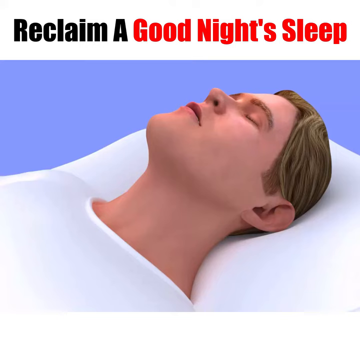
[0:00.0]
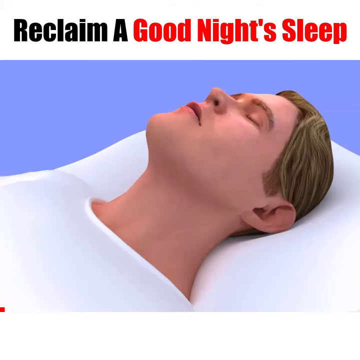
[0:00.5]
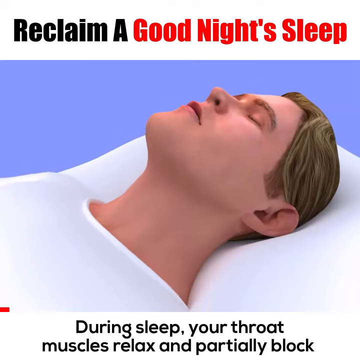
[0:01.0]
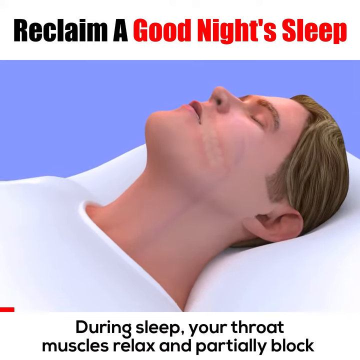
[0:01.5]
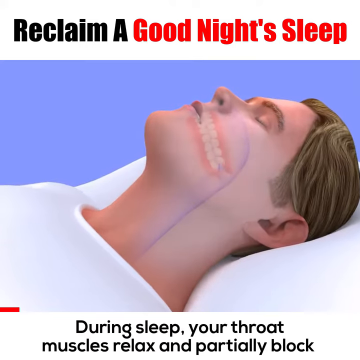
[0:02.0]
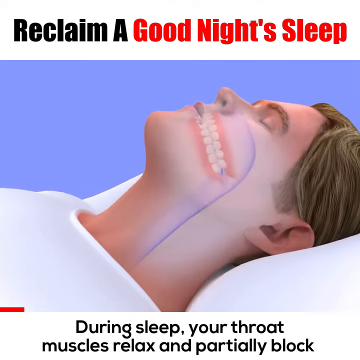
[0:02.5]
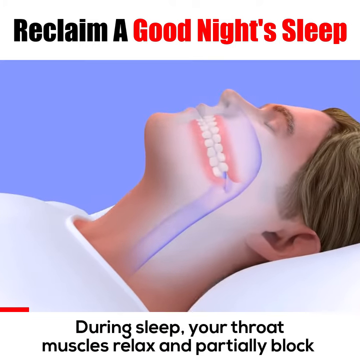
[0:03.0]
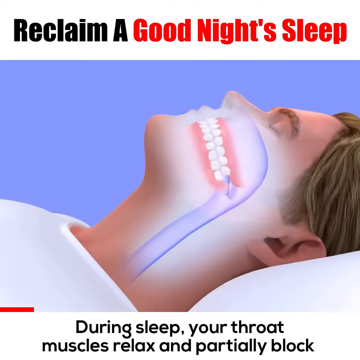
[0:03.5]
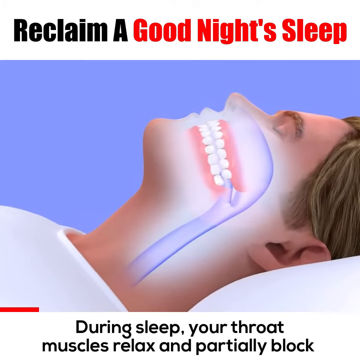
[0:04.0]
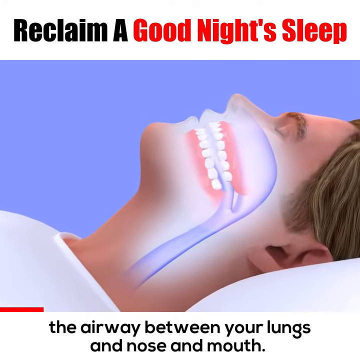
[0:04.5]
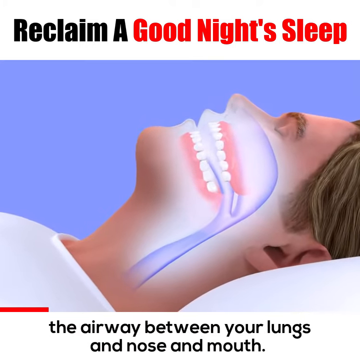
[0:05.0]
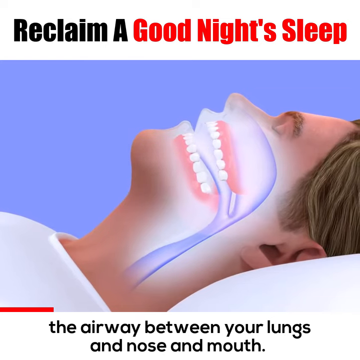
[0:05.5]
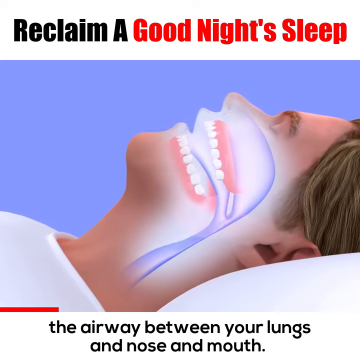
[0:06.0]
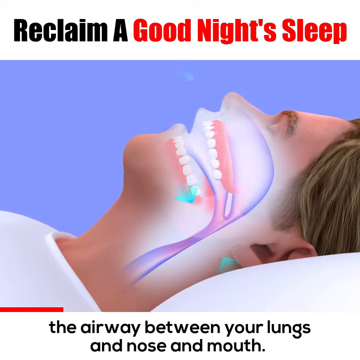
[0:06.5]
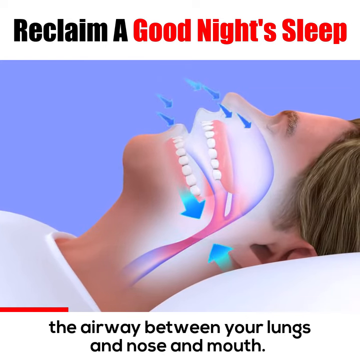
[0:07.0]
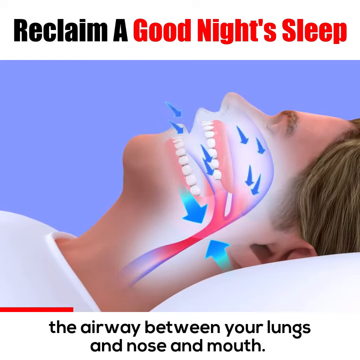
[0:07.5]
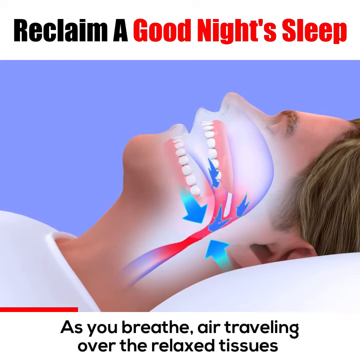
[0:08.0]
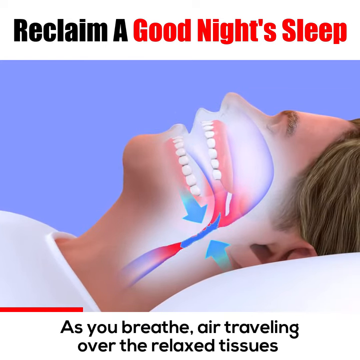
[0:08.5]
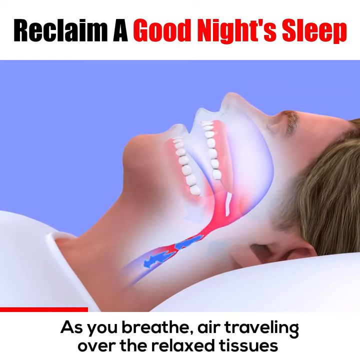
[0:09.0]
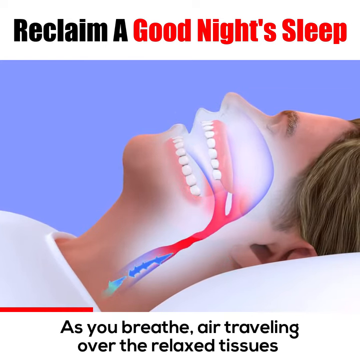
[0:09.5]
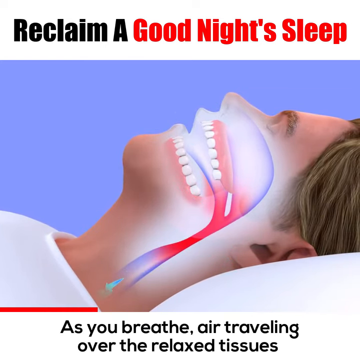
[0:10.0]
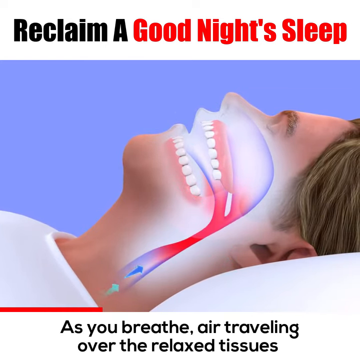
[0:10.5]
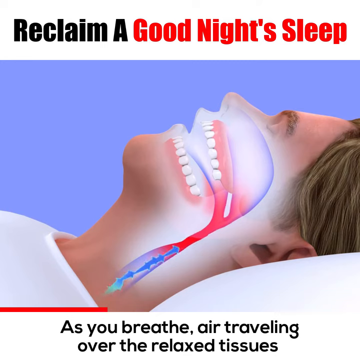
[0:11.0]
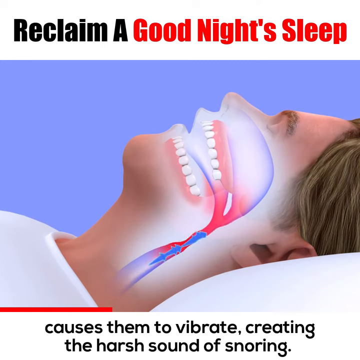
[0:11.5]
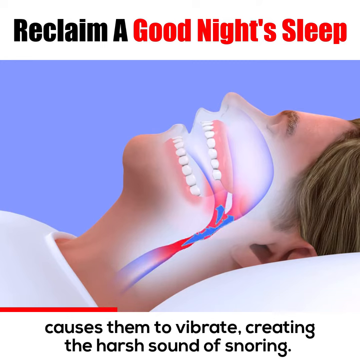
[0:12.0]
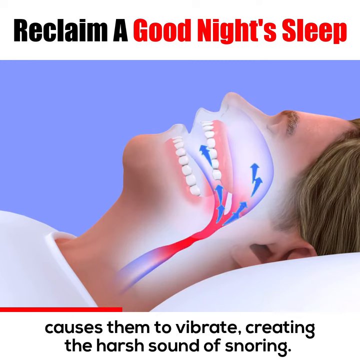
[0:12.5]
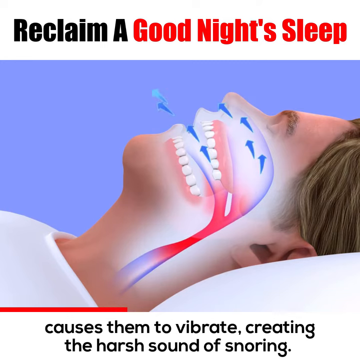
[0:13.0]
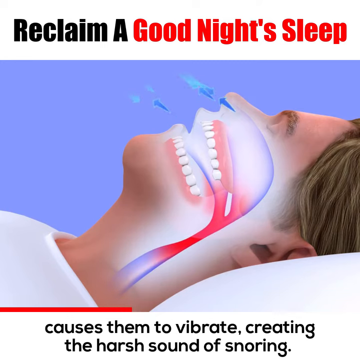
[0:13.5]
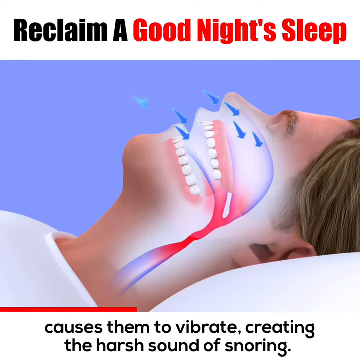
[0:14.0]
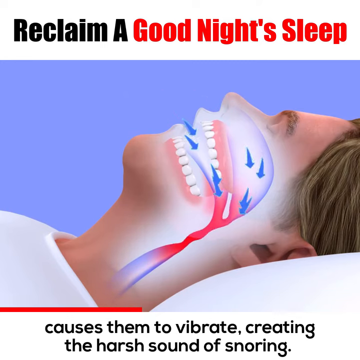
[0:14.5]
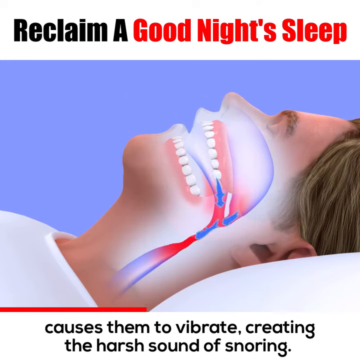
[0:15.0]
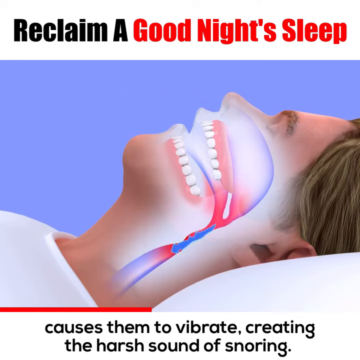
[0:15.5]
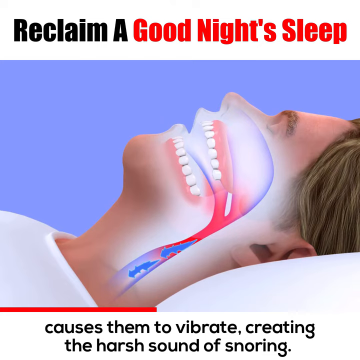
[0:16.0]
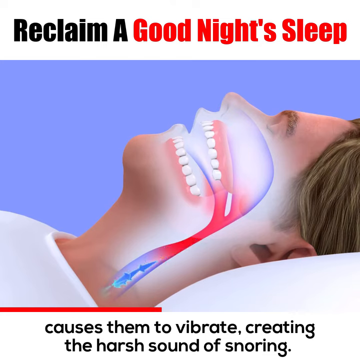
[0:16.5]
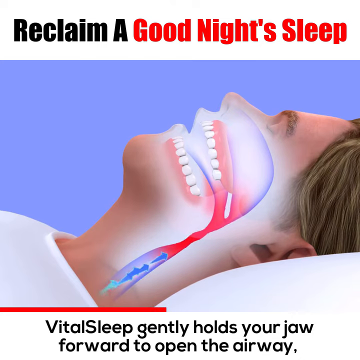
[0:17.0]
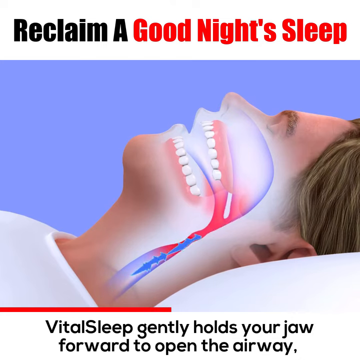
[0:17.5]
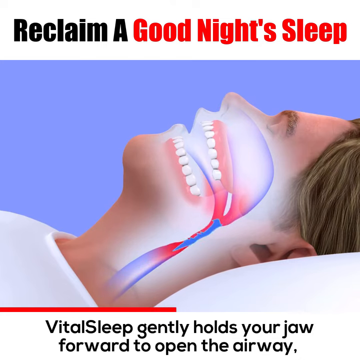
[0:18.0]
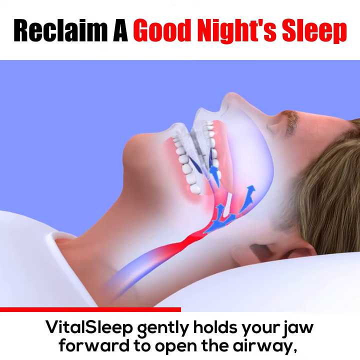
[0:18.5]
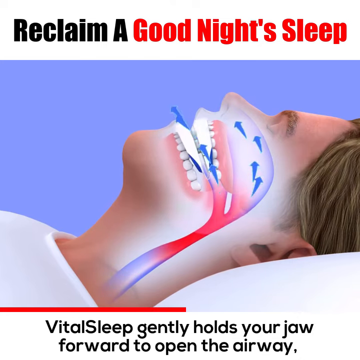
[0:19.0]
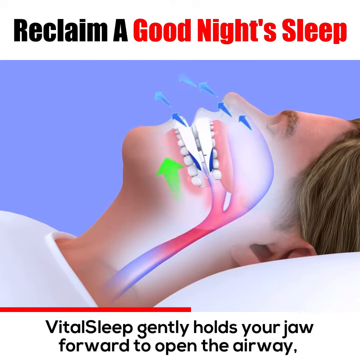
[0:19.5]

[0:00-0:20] The video opens with an illustration or animated clip of a man lying on a bed. He has blonde hair and brown eyebrows and wears a white top. At the top, black text reads "Reclaim a" followed by red text reading "good night's sleep." At the bottom of the screen, black text on a white background reads "during sleep your throat muscles relax and partially block." A red bar moves across the screen to indicate how much of the video is left. The video zooms in on the illustrated man, revealing the inside of his mouth with his teeth and gums, blue pipes within, and blue arrows going behind the throat. Black text at the bottom reads "as you breathe air traveling over the relaxed tissues causes them to vibrate creating the harsh sound of snoring." Blue arrows go in and out of the man's mouth. Black text at the bottom then reads "Vita Sleep gently holds your jaw."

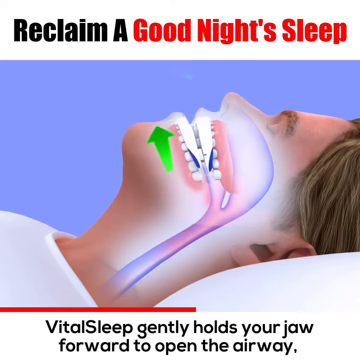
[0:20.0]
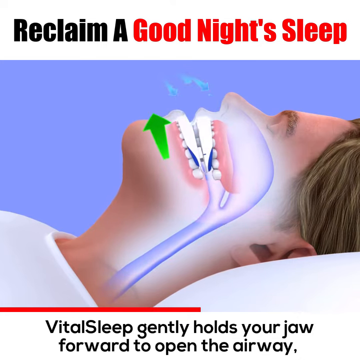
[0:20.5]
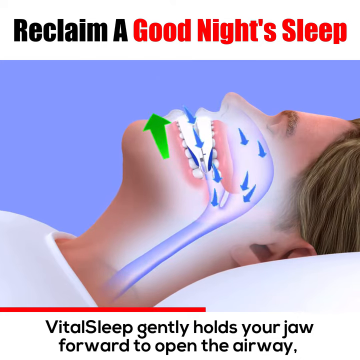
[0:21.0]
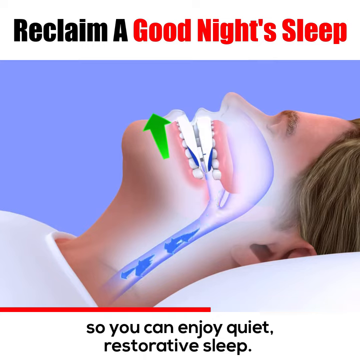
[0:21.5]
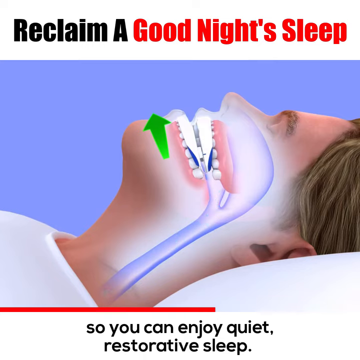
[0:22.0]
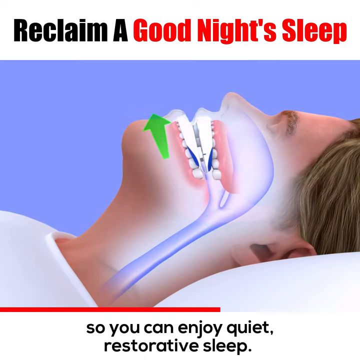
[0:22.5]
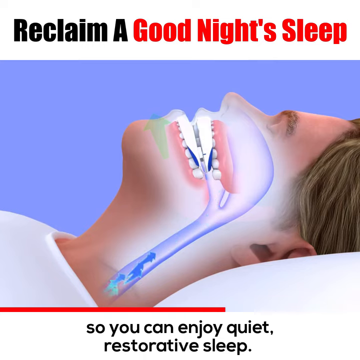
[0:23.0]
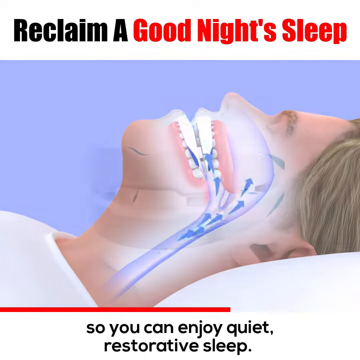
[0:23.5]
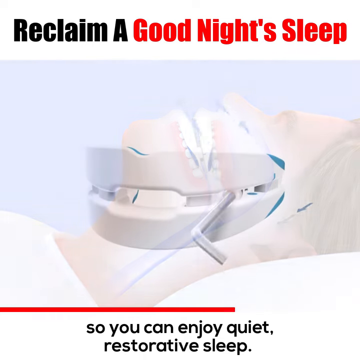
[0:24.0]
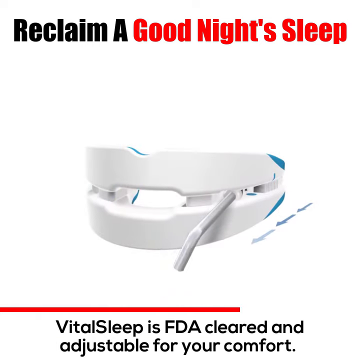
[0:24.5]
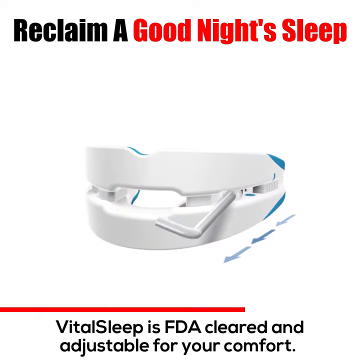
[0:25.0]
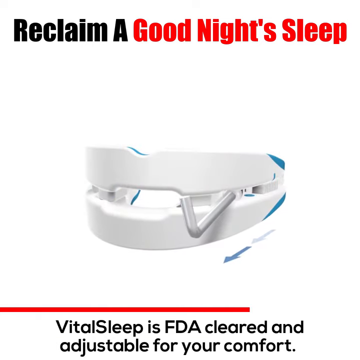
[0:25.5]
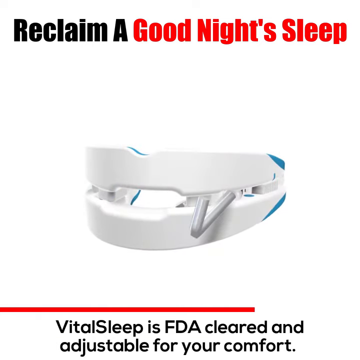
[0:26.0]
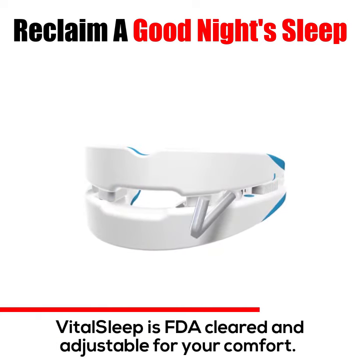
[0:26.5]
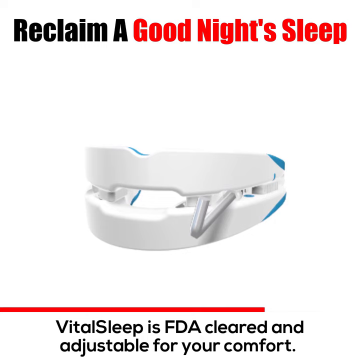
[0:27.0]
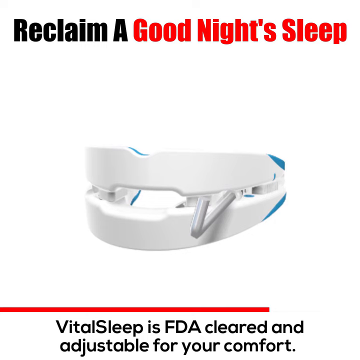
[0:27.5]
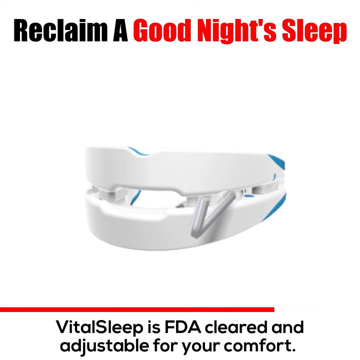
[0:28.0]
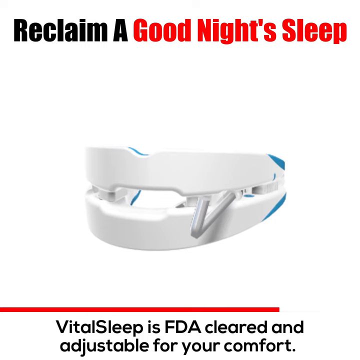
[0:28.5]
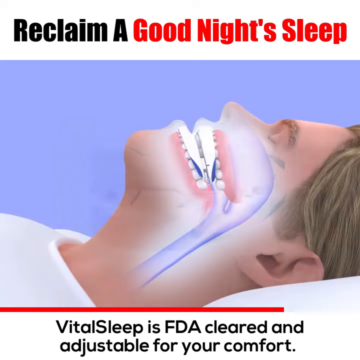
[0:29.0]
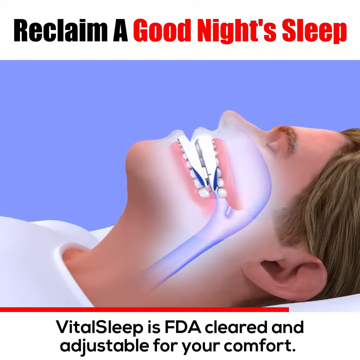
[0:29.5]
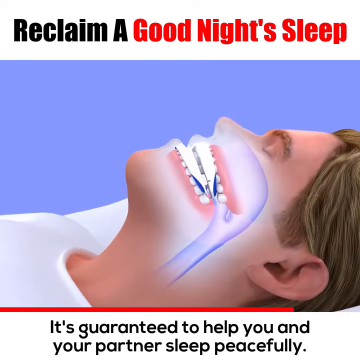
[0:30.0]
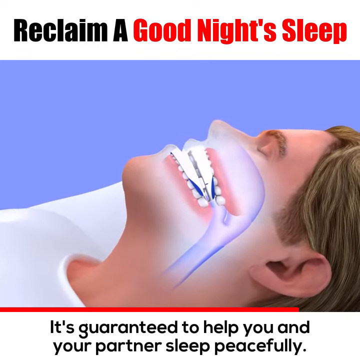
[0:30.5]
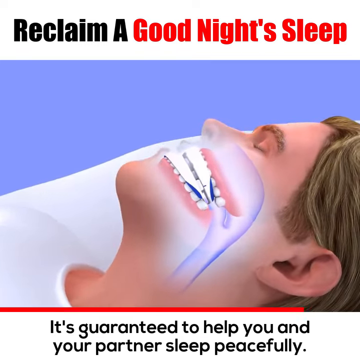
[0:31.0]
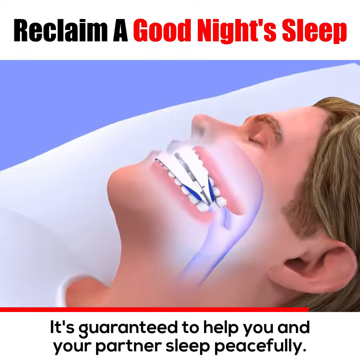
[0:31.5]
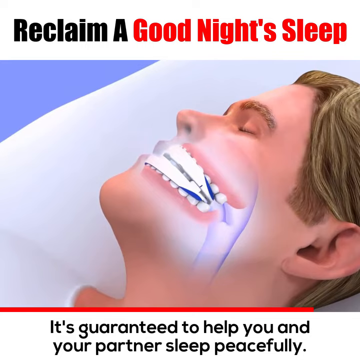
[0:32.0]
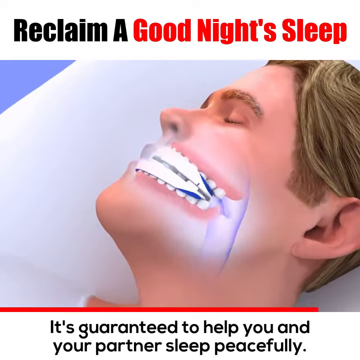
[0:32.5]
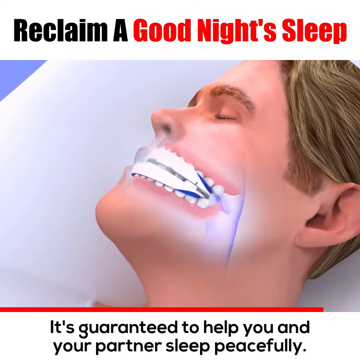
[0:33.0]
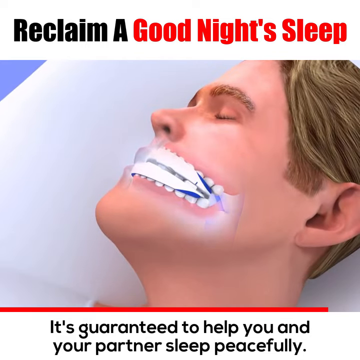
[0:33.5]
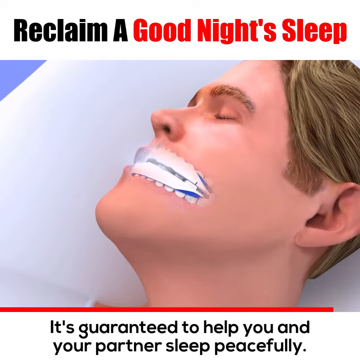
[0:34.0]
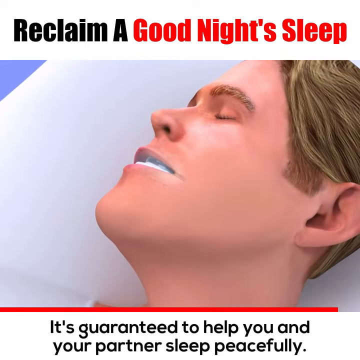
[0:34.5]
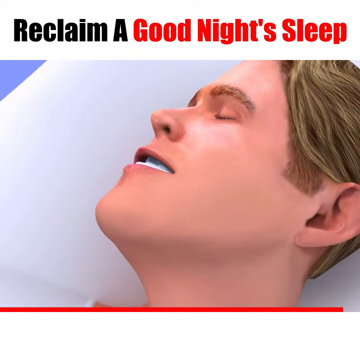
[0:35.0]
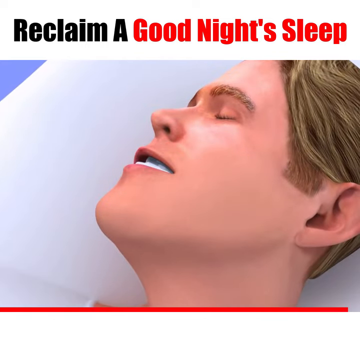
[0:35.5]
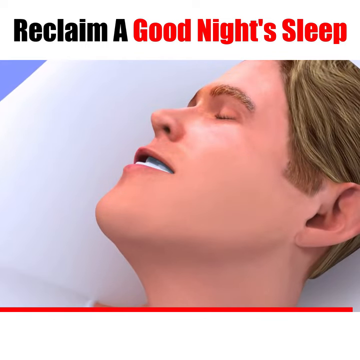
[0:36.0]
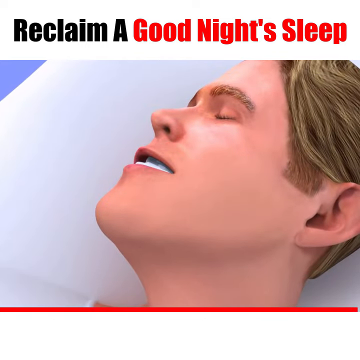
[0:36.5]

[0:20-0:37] Blue arrows go in through the man's nose and then back up, and a green arrow points upwards from his chin. The scene changes to what looks like a mouth guard with a small straw-like item sticking out of it, spinning around, with blue arrows pointing outwards from its side. Black text on a white background at the bottom reads "vital sleep is FDA cleared and adjustable for your comfort," while the black and red text "reclaim a good night's sleep" remains at the top. The video returns to the man with the inside of his mouth visible, showing his gums and teeth, and black text at the bottom reads "it's guaranteed to help you and your partner sleep peacefully." The camera turns around to a view from the top of the man, showing more of his face rather than his side. The red bar continues across the screen until it reaches the end. The man returns to his normal state, the inside of his mouth no longer visible, and he has the device in his mouth.